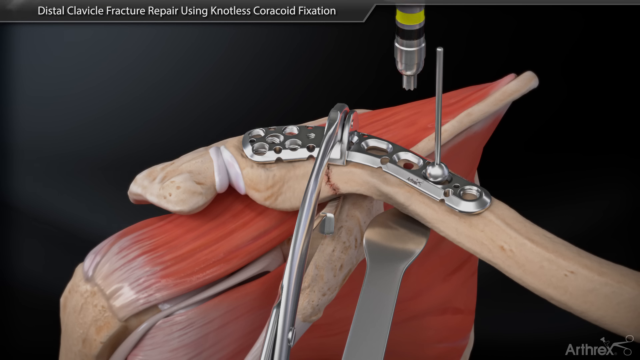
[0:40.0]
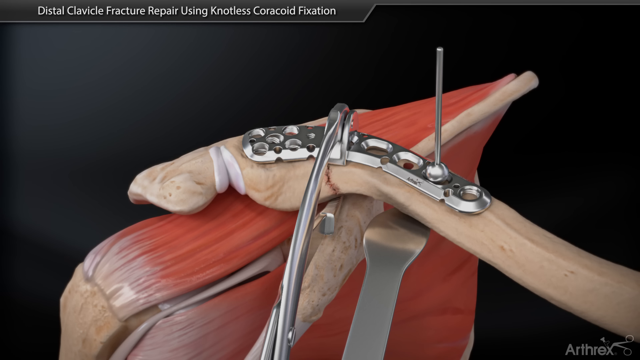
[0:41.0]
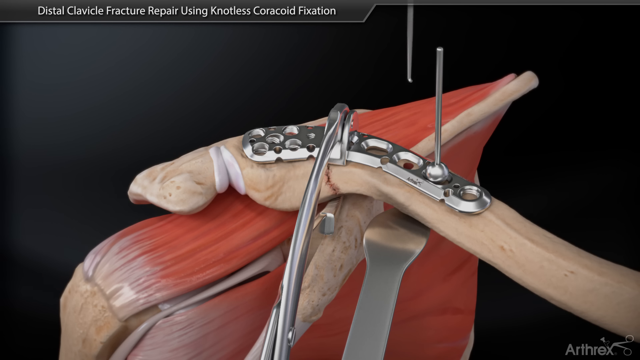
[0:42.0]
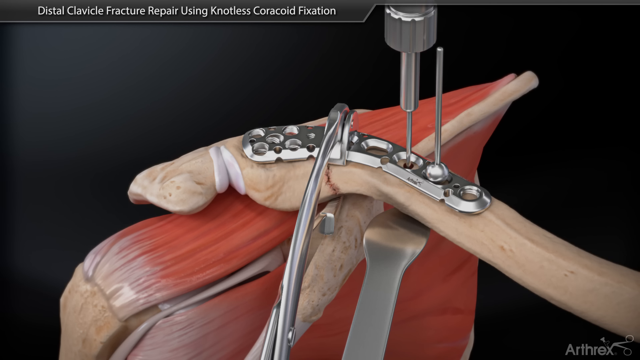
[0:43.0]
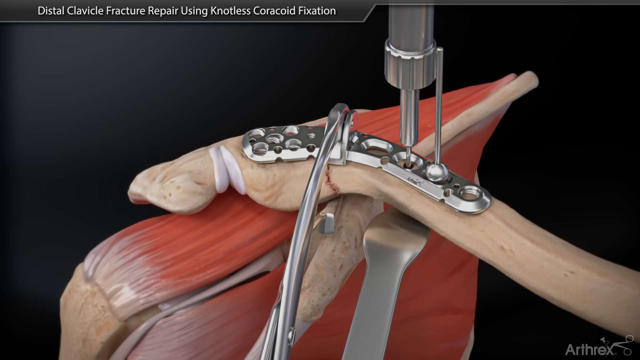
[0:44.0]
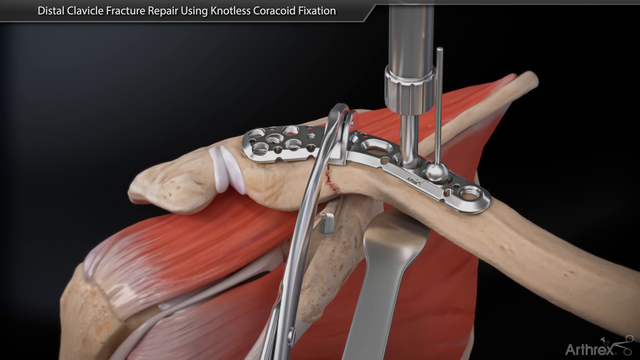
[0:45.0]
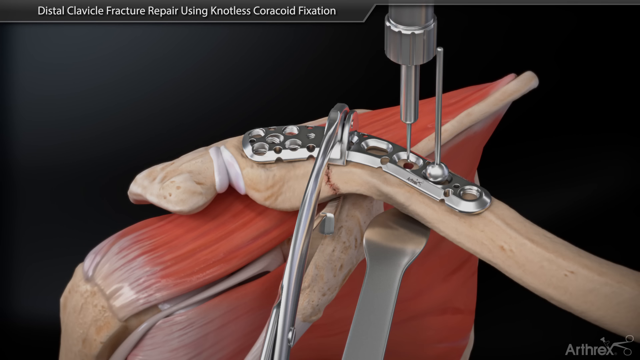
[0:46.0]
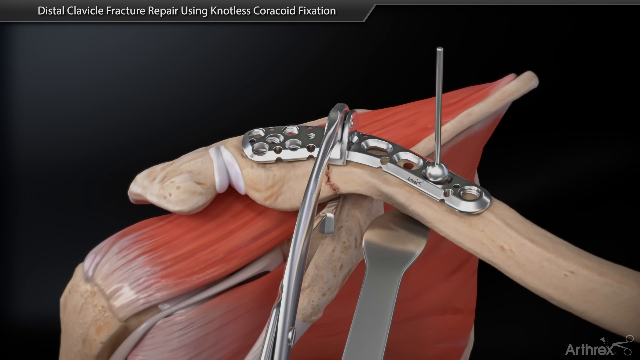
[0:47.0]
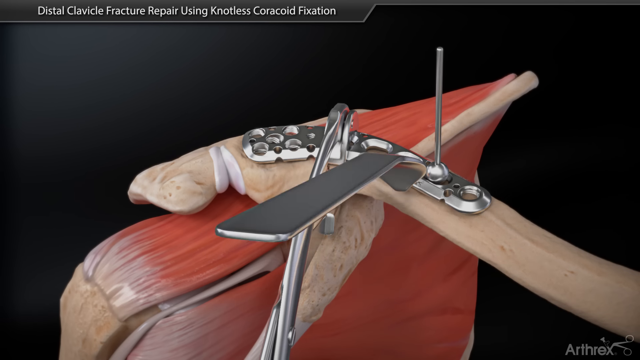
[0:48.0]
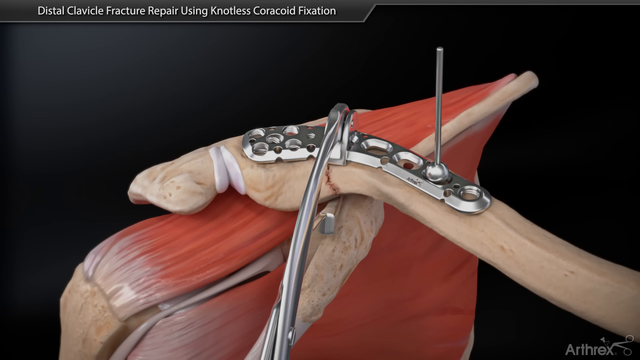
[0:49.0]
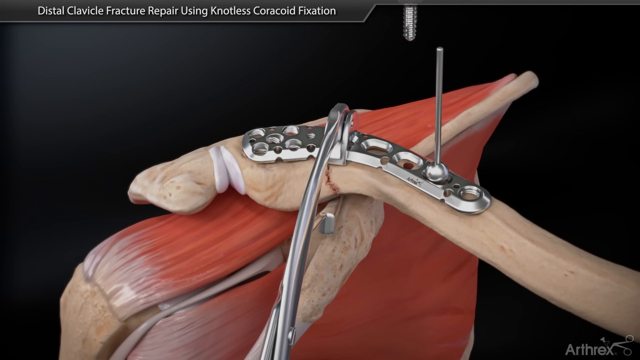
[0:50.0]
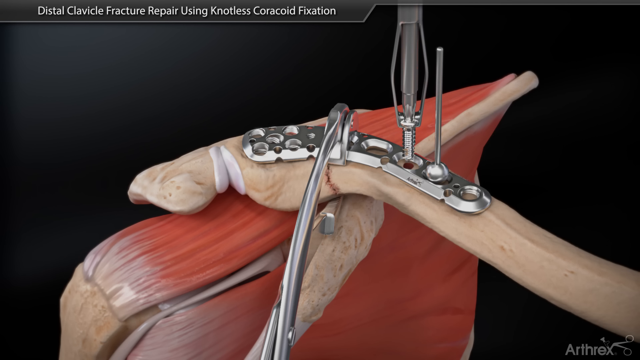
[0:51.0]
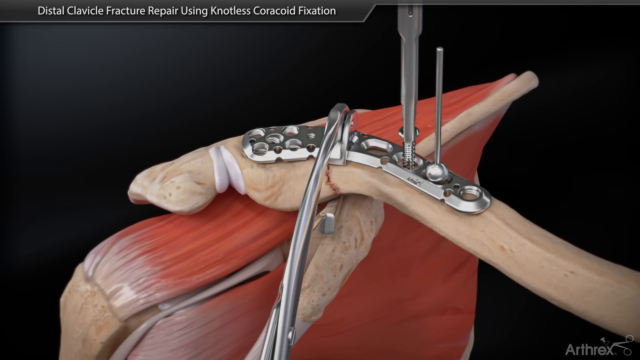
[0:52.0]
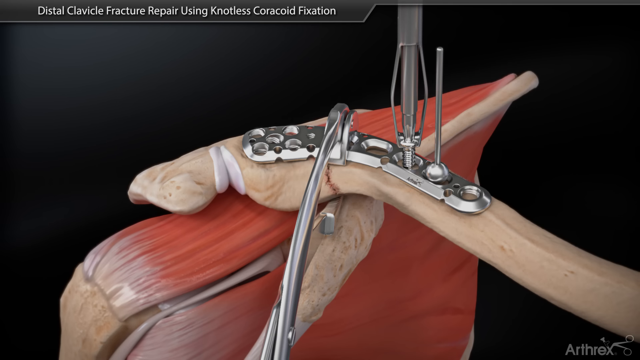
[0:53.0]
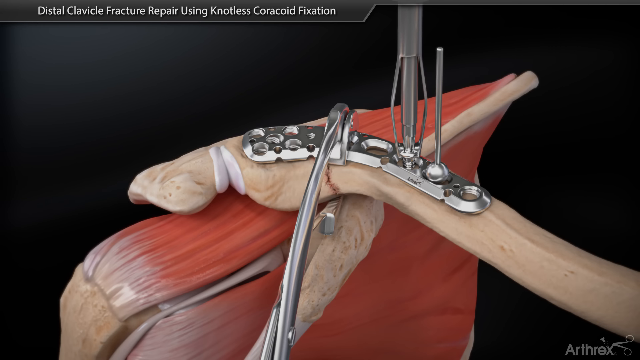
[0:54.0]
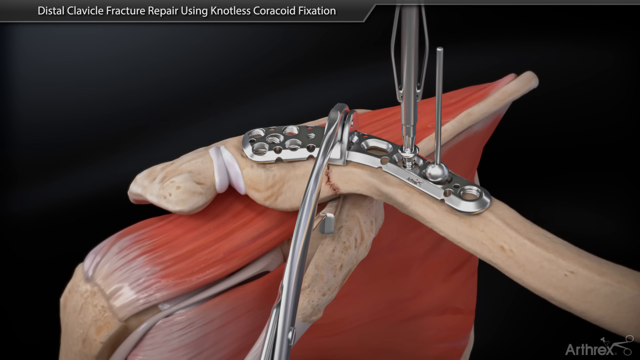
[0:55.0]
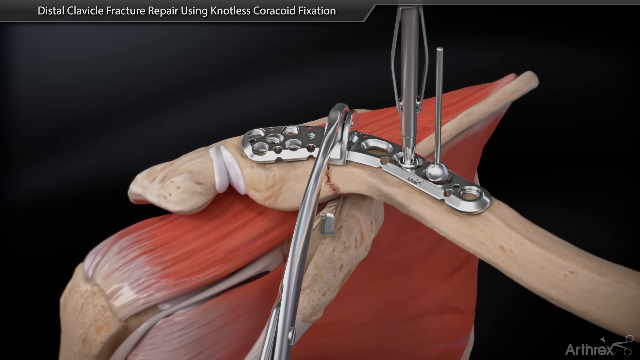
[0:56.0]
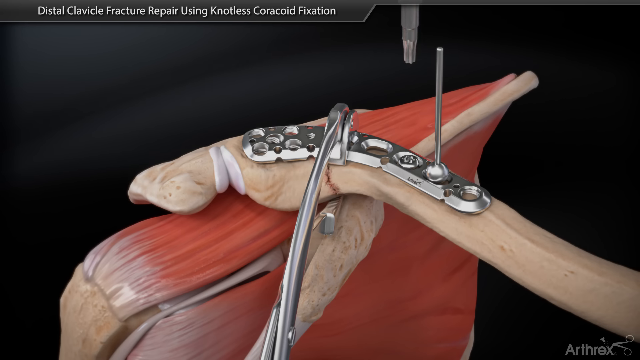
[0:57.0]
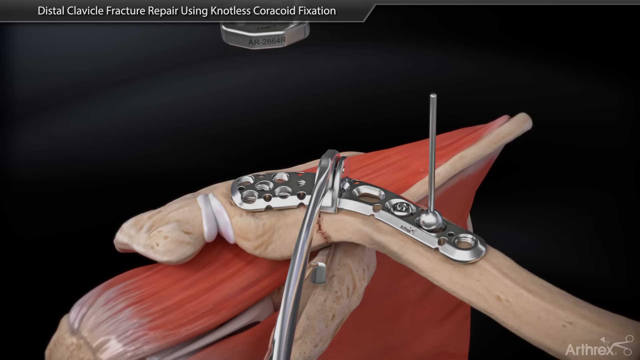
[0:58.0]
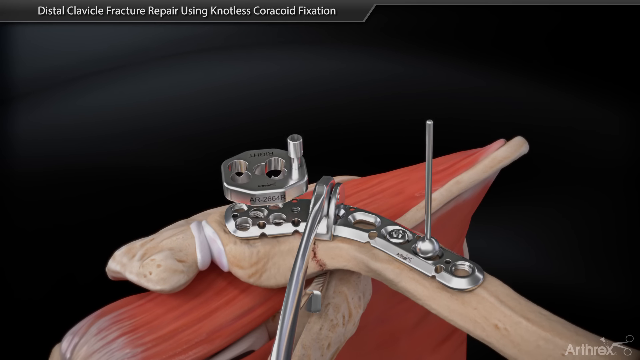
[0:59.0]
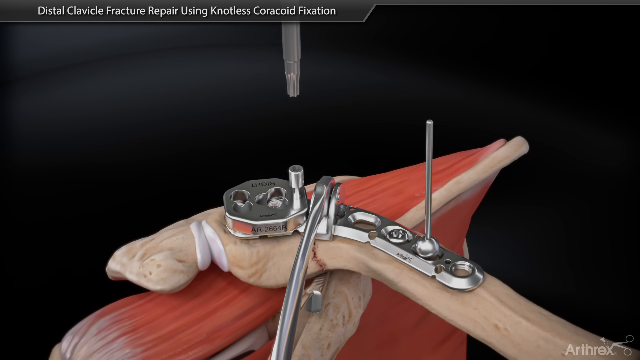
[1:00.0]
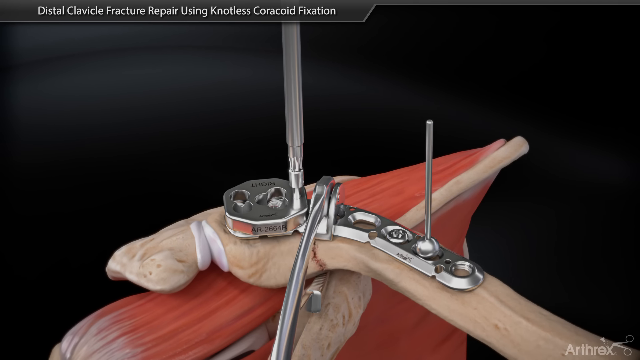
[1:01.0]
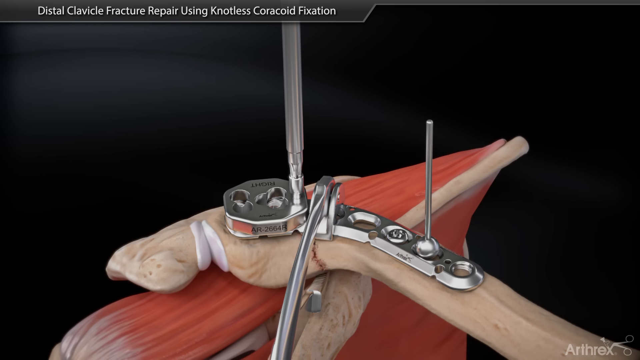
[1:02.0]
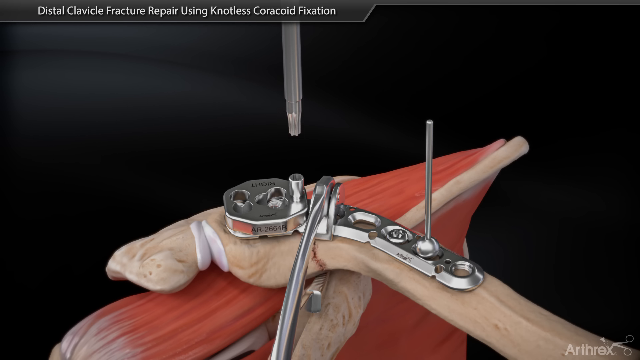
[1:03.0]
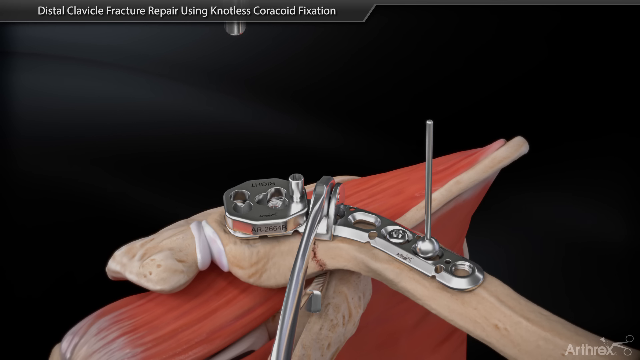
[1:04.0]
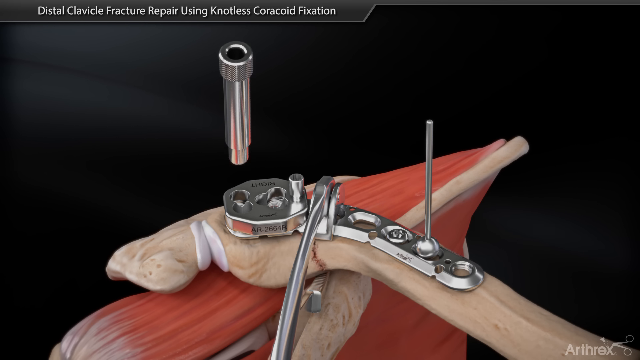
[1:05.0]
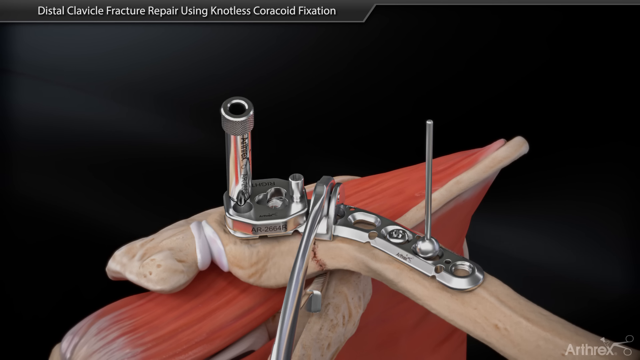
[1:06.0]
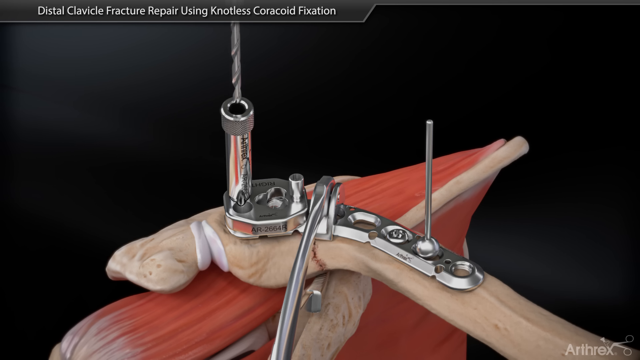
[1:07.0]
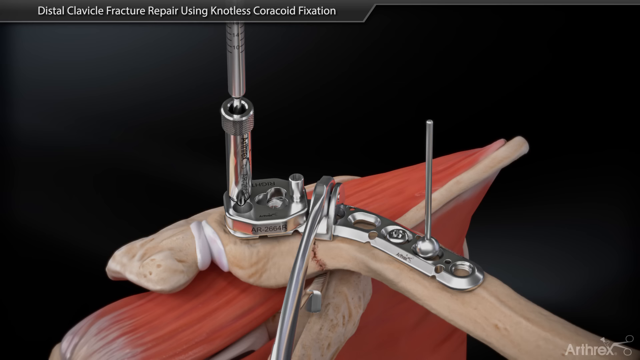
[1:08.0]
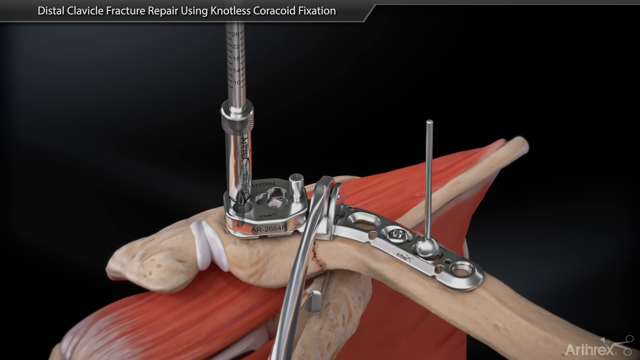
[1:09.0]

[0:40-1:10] The hole has just been drilled. From the top, above the hole, a metal device comes down with a long pin that pushes all the way through the hole and then comes back out, and a smaller portion of the pin is visible coming out. A little screw comes down from the top, twisting clockwise, and screws in about two times; then an extender comes out and twists it three more times. The muscle and bone move down a little, and on the left side a six-sided piece of metal comes down and attaches to the left side, with a little piece sticking up to its right. A little Phillips-head-looking screwdriver comes down, tightens it down, and goes off the top of the screen. Another cylinder comes down and attaches to the left side as a drill bit comes down between it, drilling down until it hits the muscle.